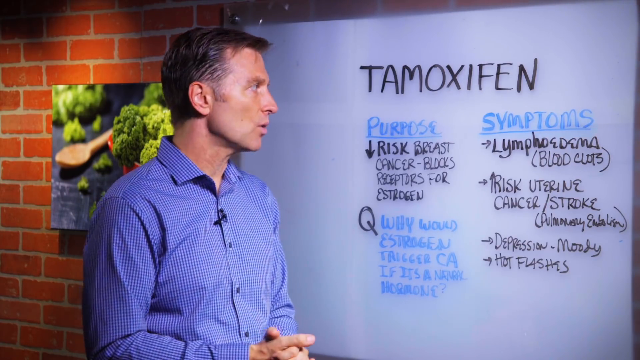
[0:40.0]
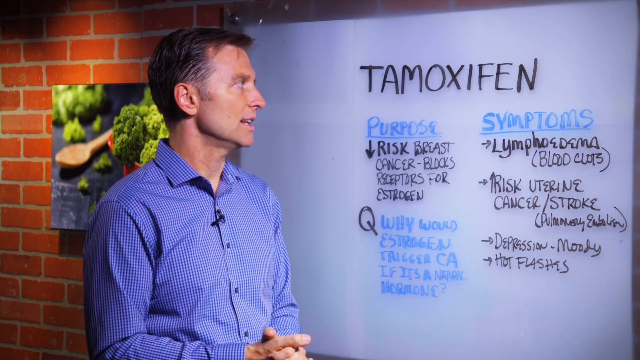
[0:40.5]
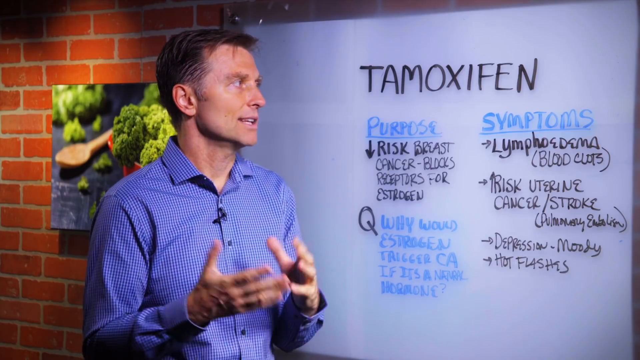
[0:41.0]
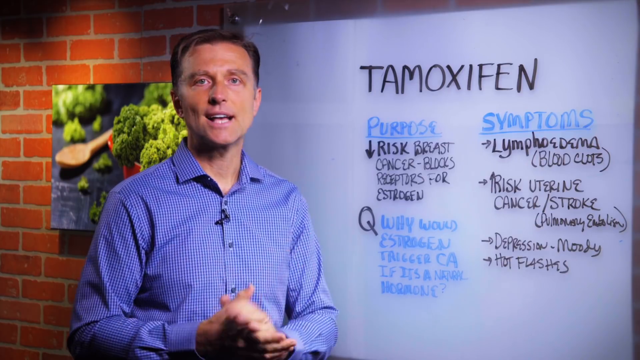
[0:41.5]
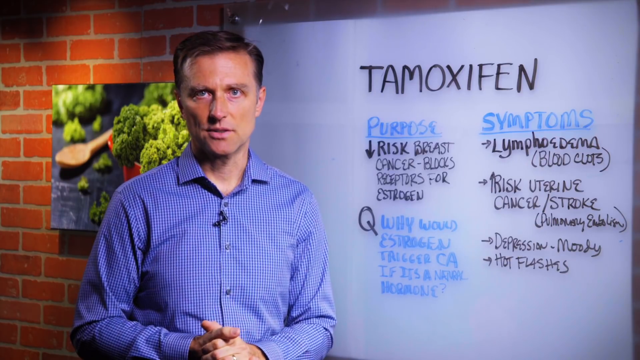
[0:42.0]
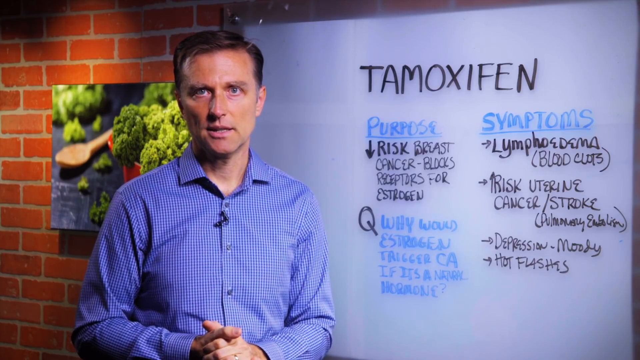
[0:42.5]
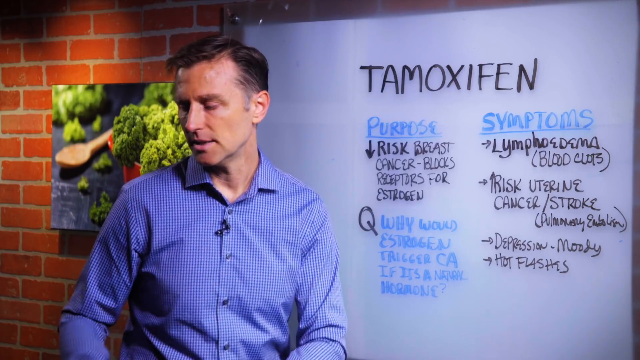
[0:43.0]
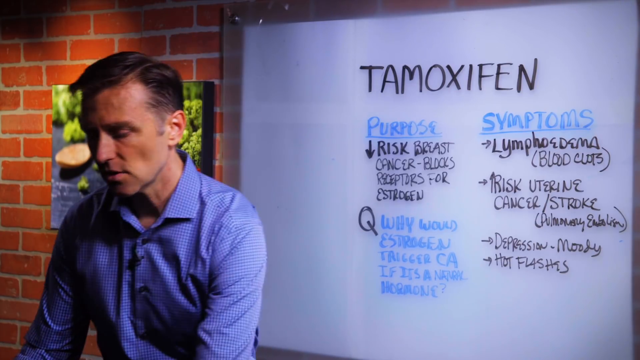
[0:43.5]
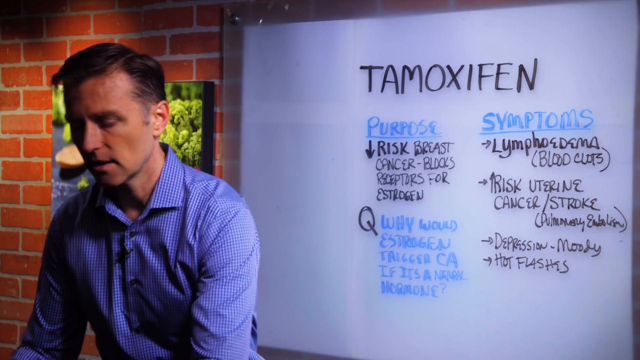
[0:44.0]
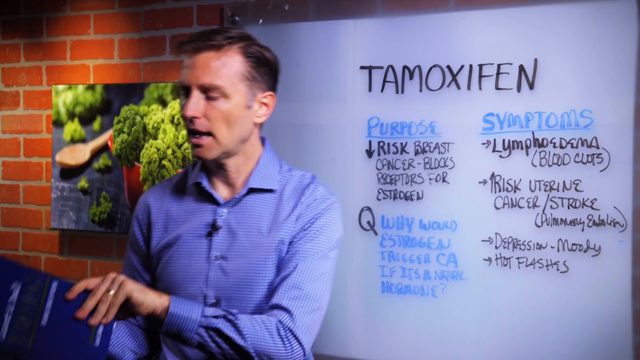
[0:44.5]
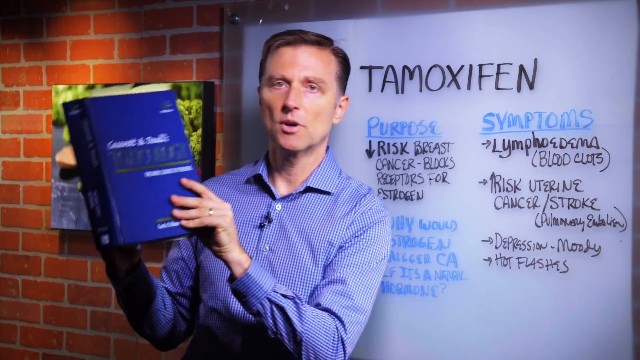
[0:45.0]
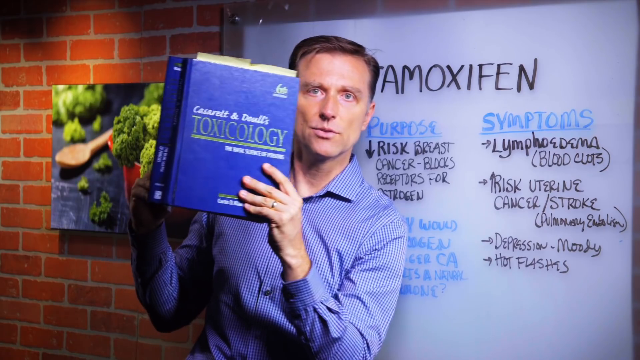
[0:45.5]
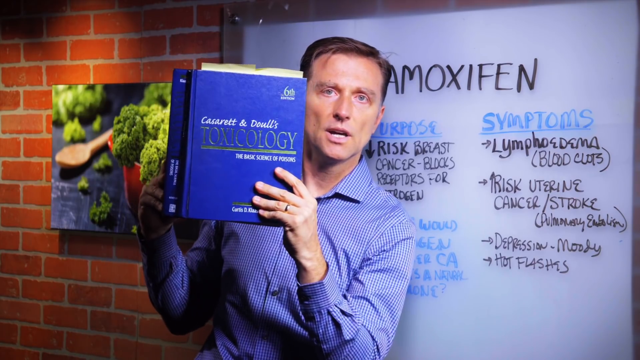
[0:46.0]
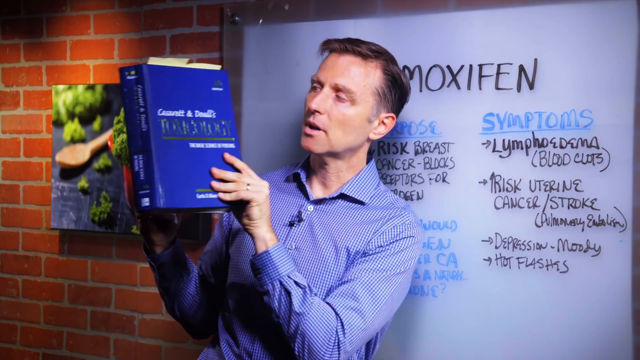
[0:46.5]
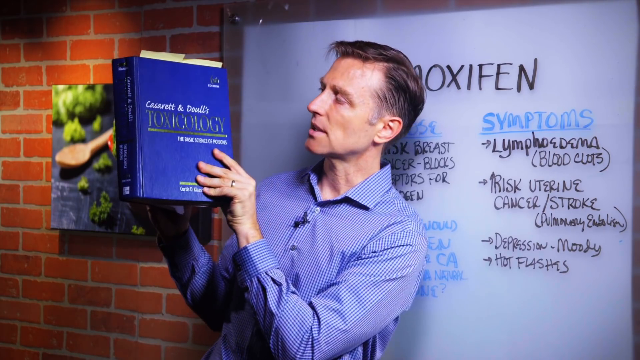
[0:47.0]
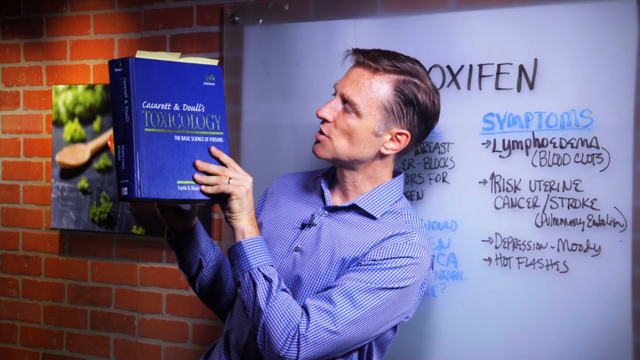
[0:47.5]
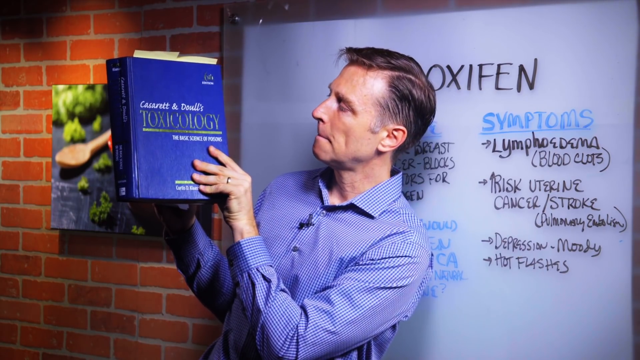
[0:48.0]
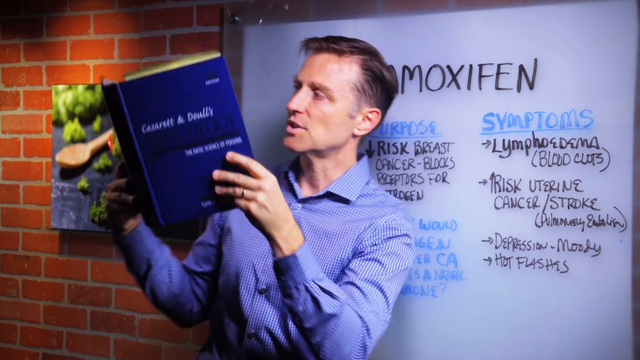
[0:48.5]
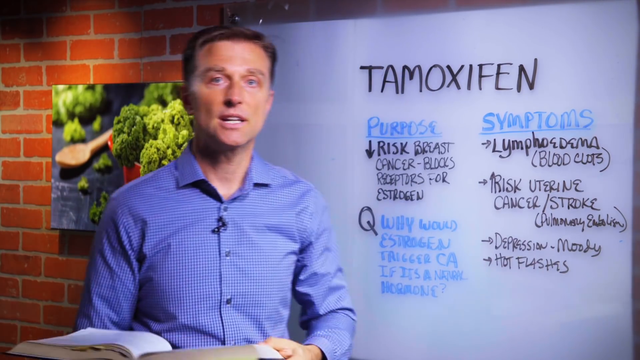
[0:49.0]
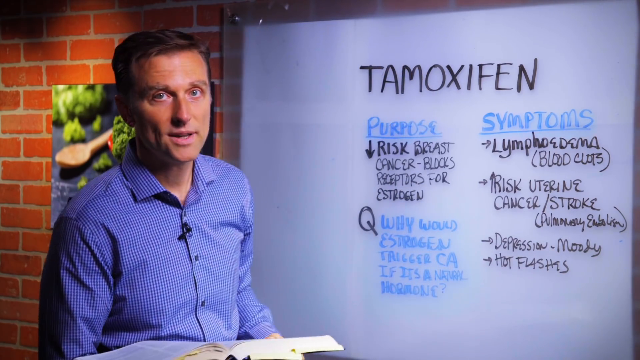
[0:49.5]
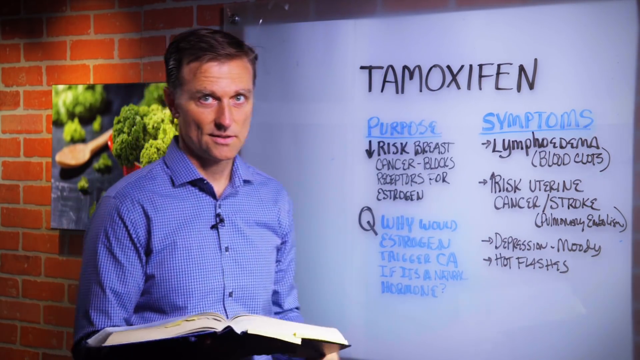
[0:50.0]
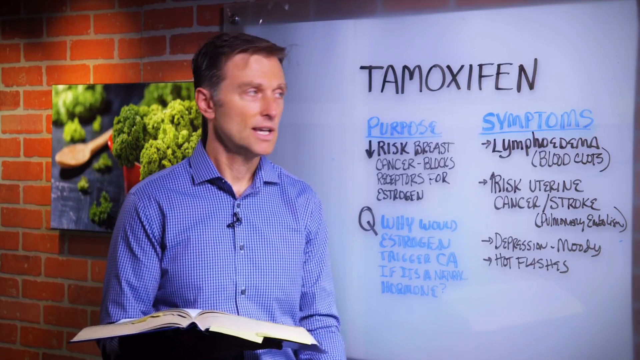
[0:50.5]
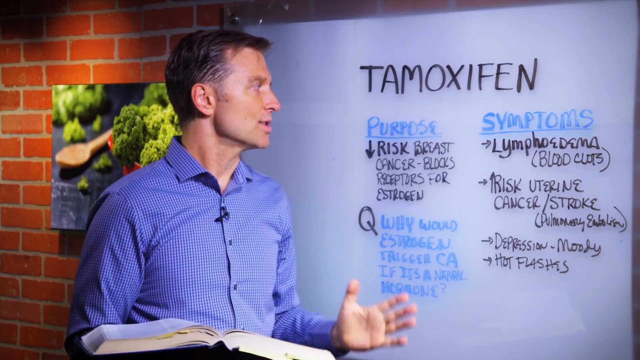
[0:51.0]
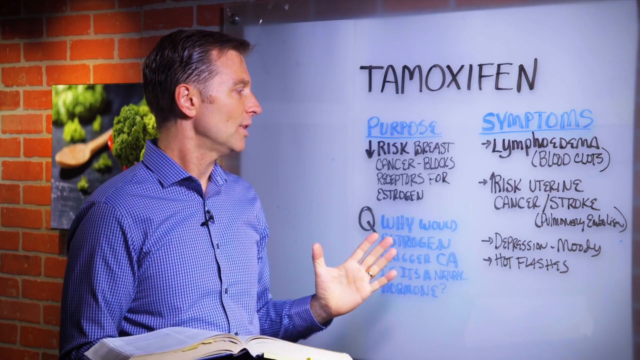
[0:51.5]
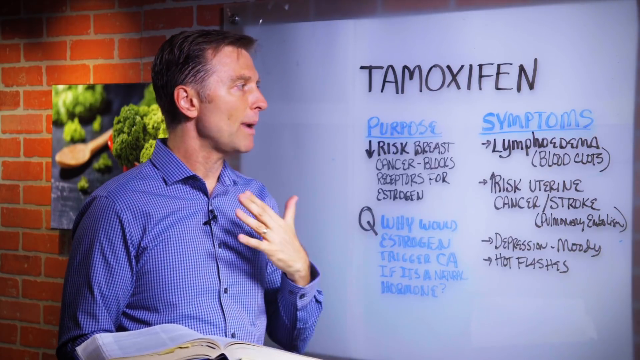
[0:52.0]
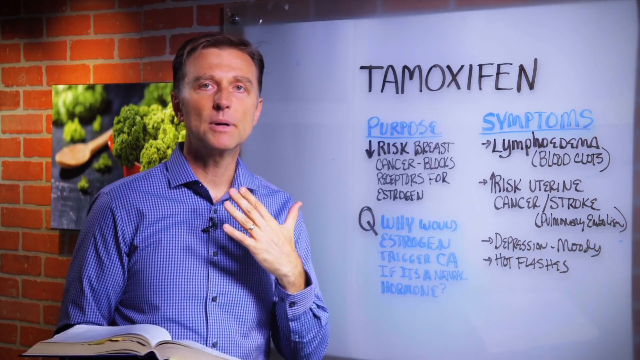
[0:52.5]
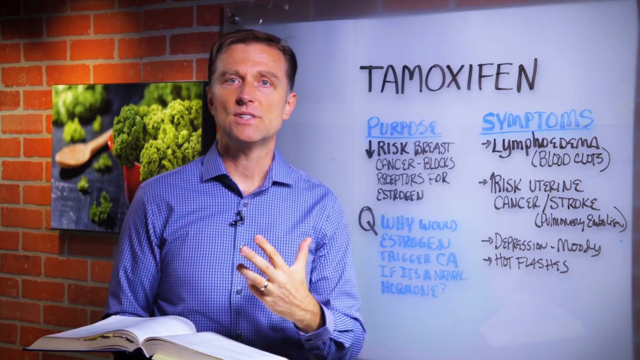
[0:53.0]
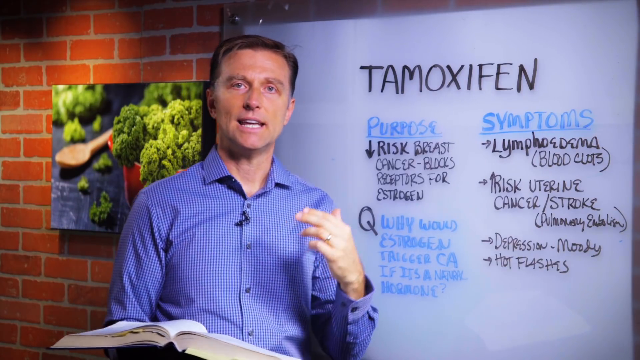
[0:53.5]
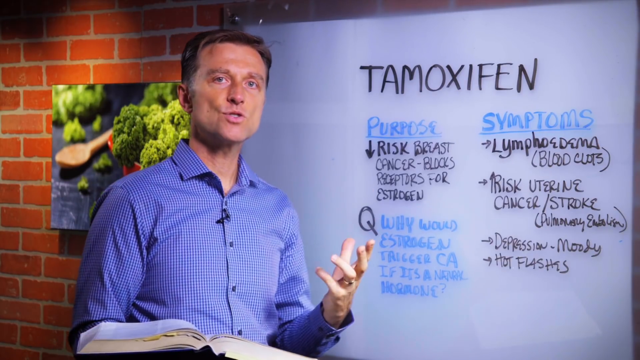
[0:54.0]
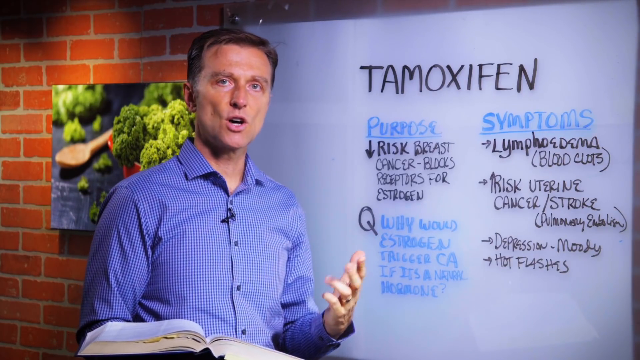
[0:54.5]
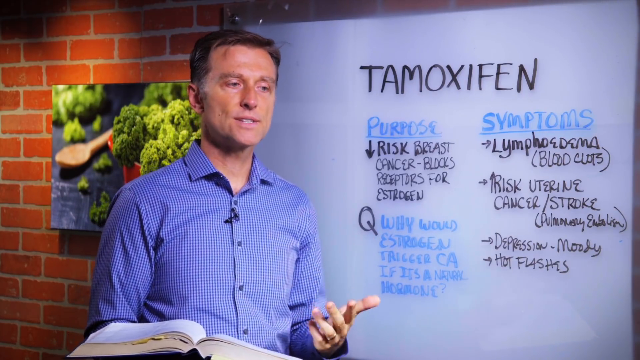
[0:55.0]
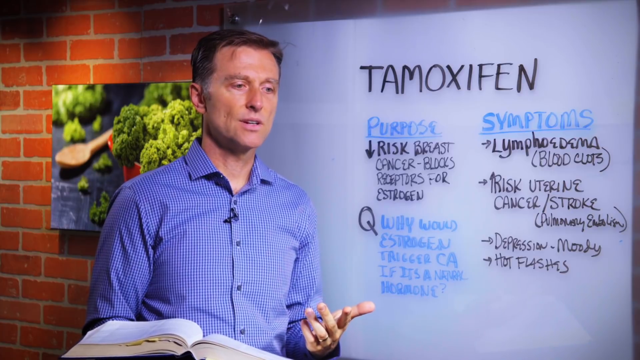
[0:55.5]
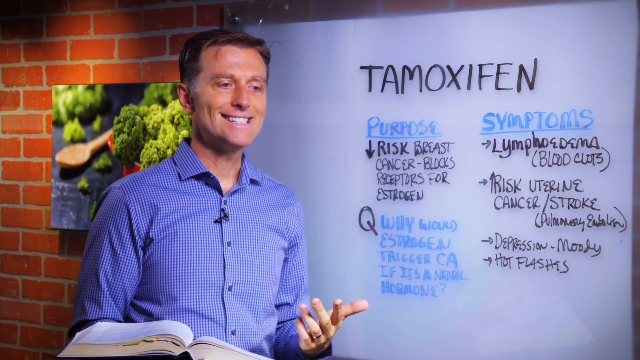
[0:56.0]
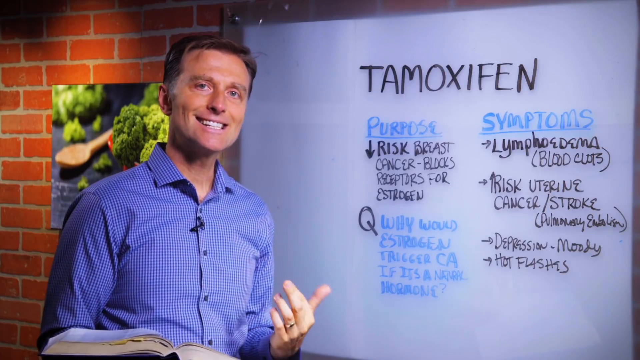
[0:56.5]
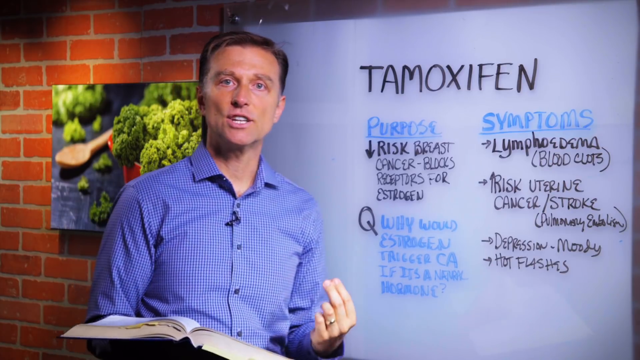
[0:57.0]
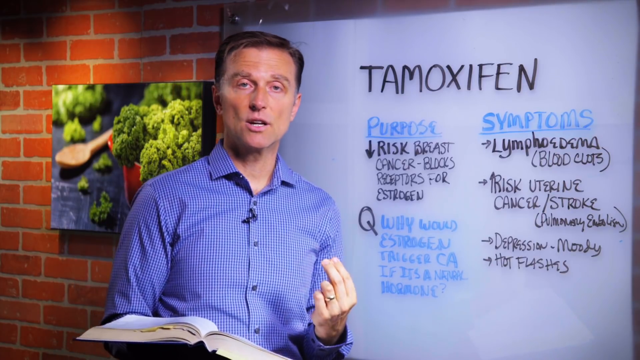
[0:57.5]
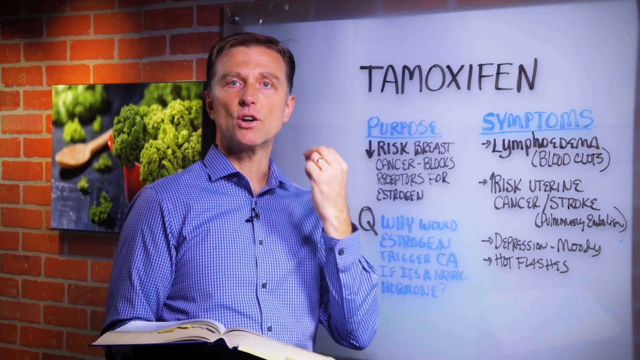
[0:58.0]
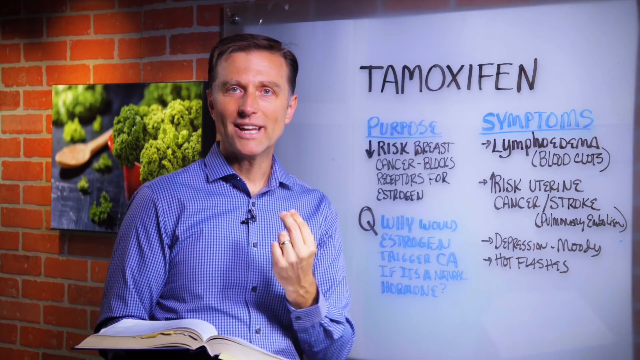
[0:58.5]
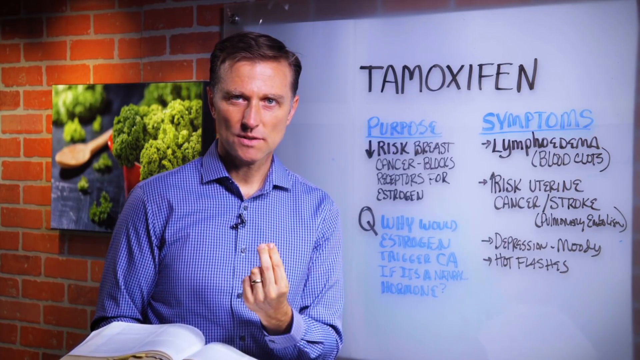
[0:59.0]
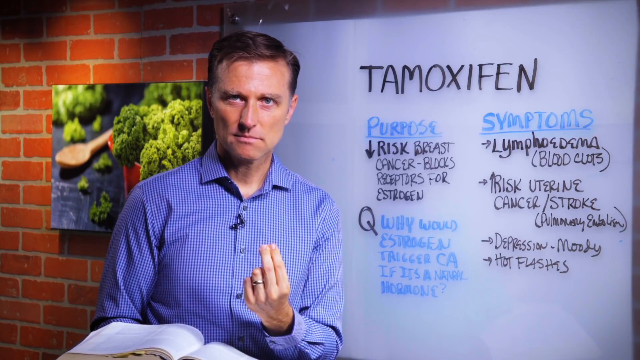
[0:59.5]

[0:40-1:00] A white man in a blue and white or gray Oxford shirt with a very small checkered pattern stands in front of a whiteboard. It reads "tamoxifen", "purpose", "reduce risk breast cancer blocks receptors for estrogen", "question. Why would estrogen trigger CA if it's a normal hormone?" and "symptoms, lymphedema, blood clots, increased risk of uterine cancer / stroke, pulmonary embolism, depression, moody, and hot flashes". Behind him, on a red brick wall, is a photo of a lot of pieces of broccoli and a wooden spoon. He turns towards the board, then picks up a blue hardcover book that says "toxicology" and flips to a page, apparently a random one.